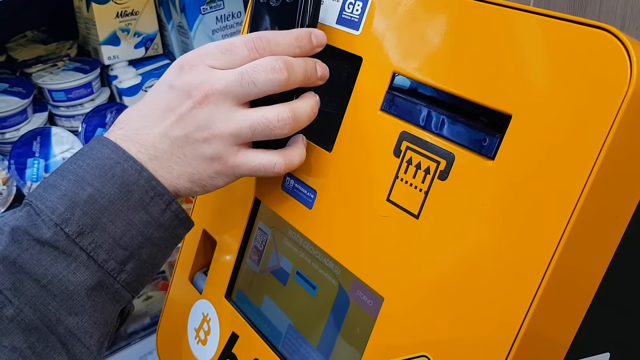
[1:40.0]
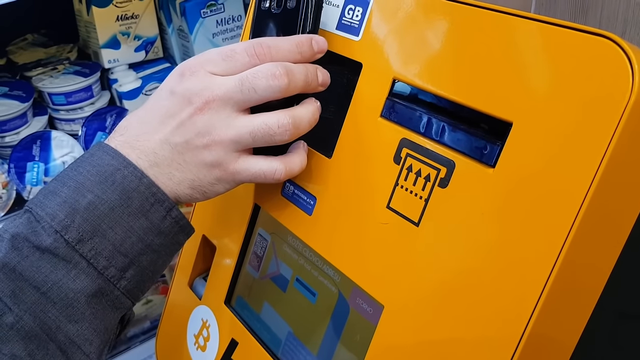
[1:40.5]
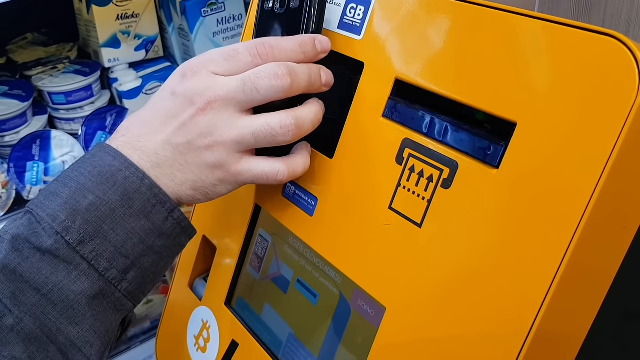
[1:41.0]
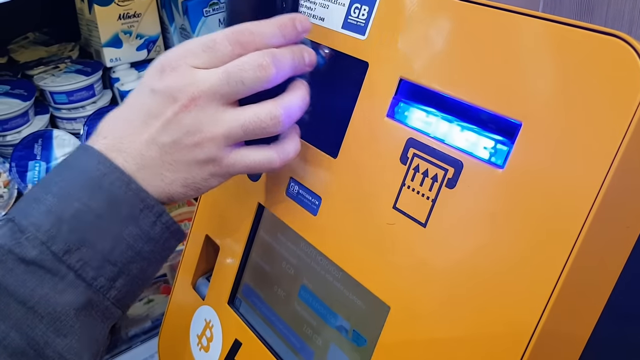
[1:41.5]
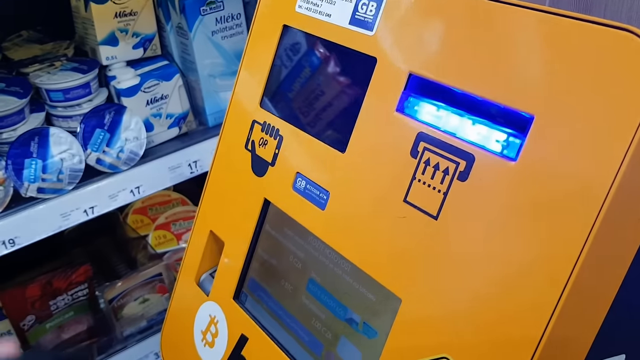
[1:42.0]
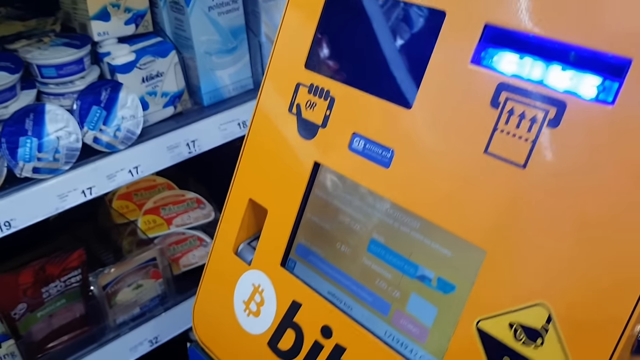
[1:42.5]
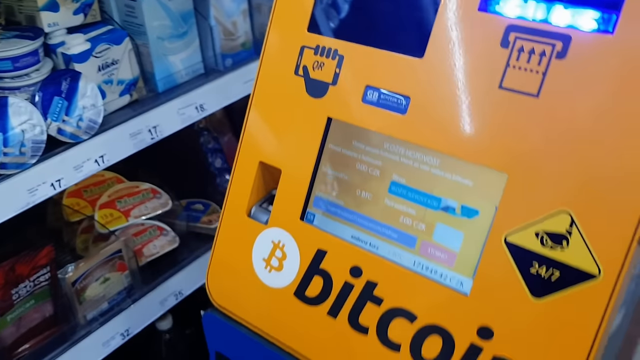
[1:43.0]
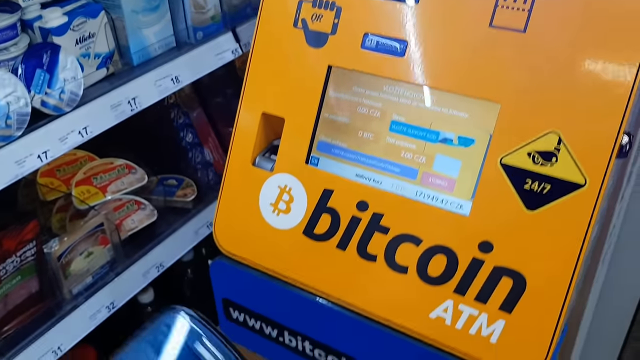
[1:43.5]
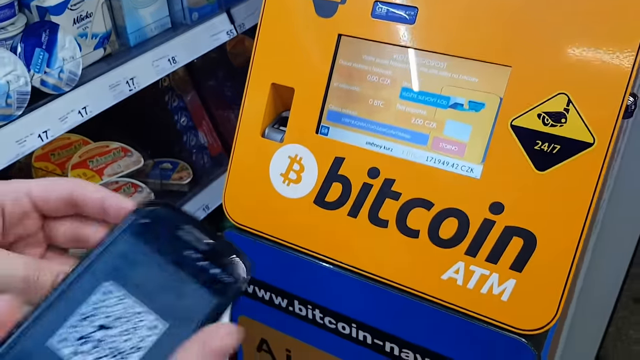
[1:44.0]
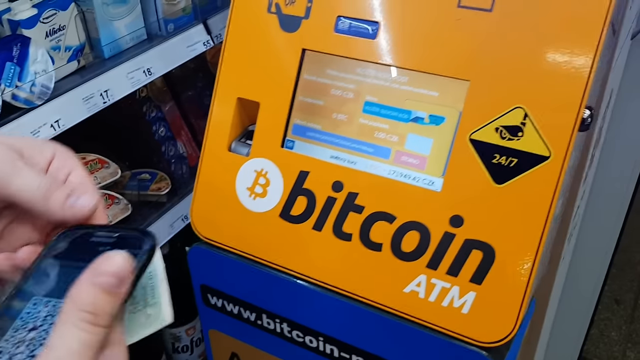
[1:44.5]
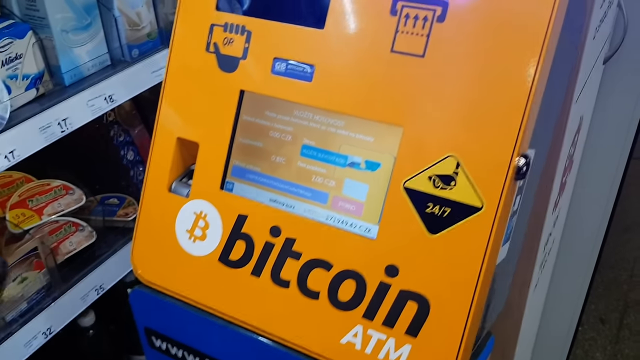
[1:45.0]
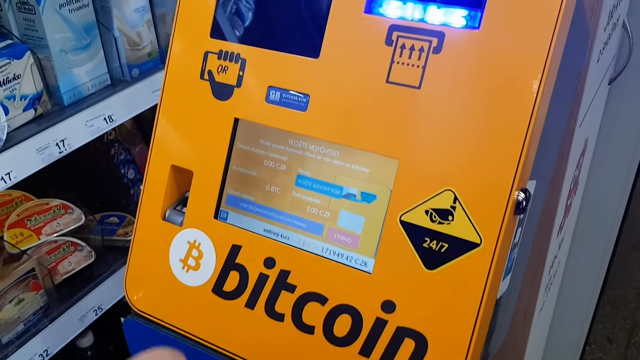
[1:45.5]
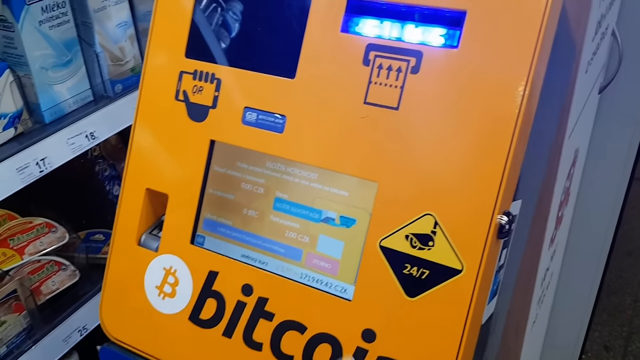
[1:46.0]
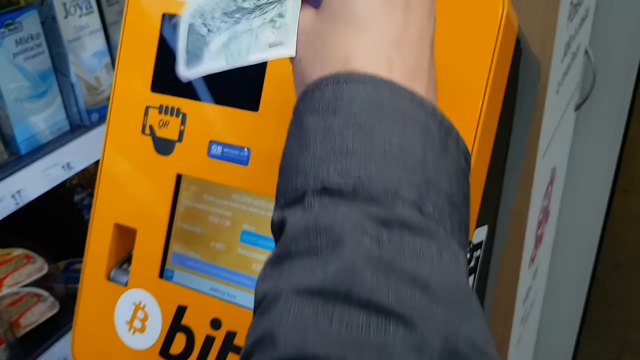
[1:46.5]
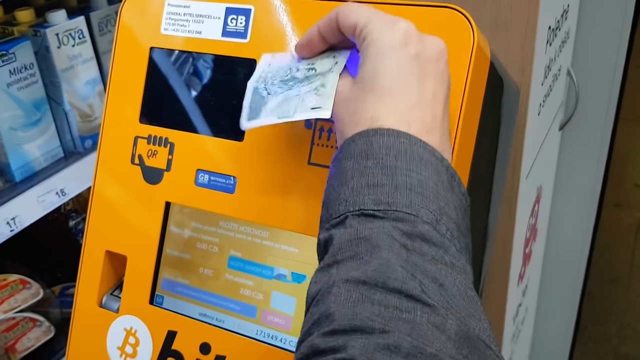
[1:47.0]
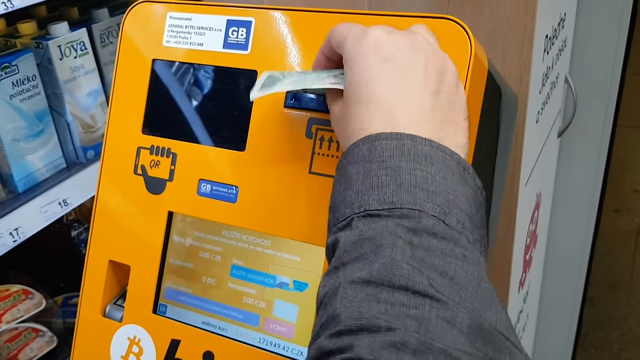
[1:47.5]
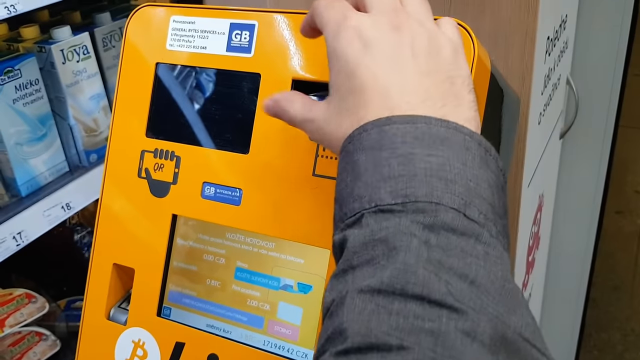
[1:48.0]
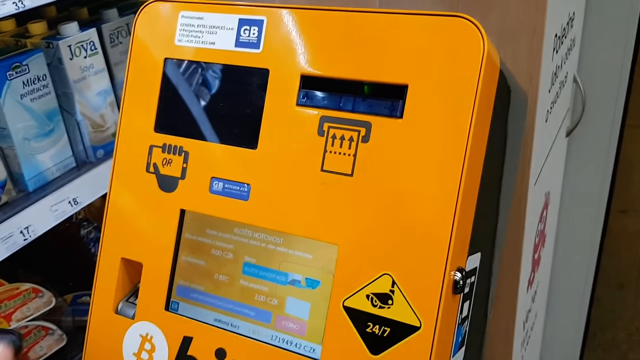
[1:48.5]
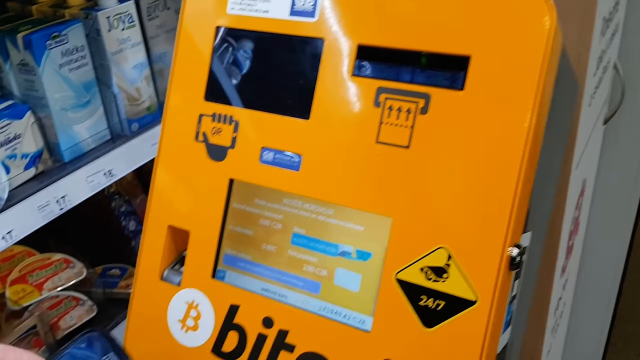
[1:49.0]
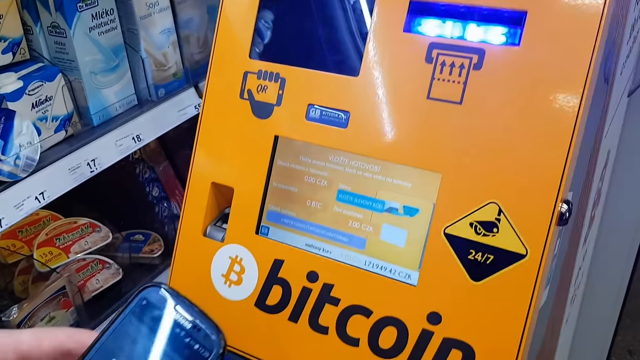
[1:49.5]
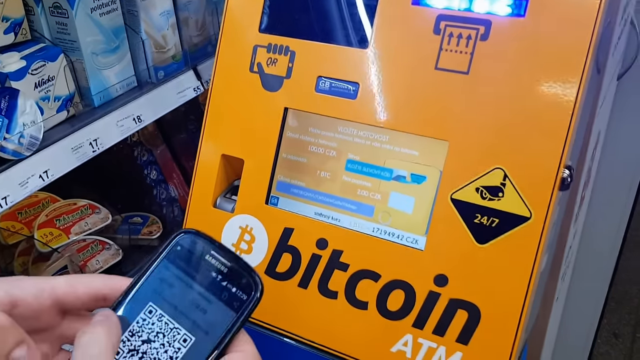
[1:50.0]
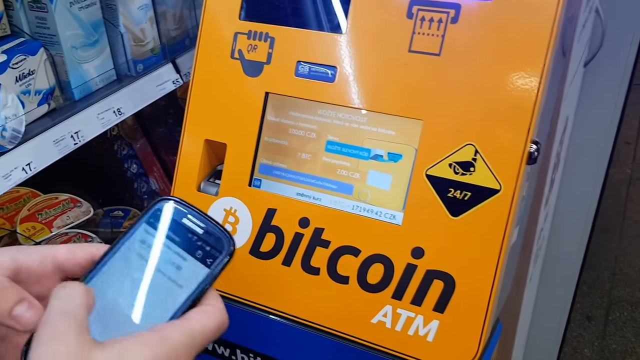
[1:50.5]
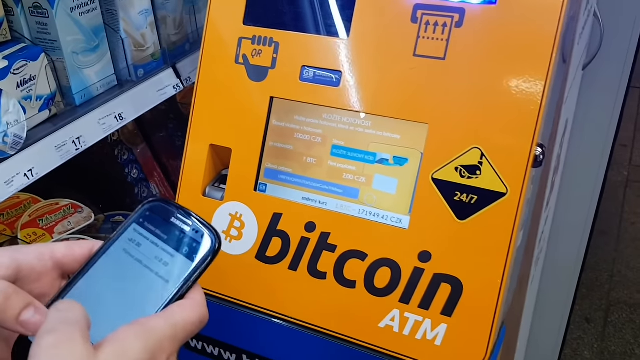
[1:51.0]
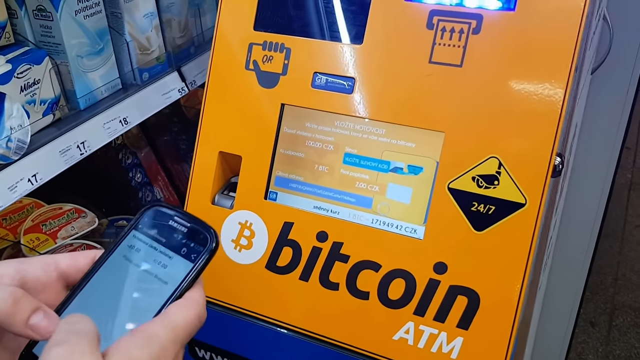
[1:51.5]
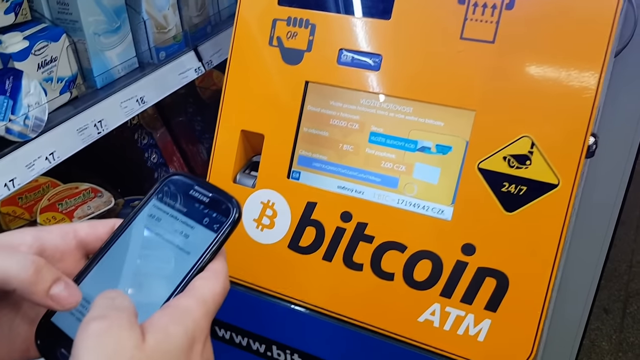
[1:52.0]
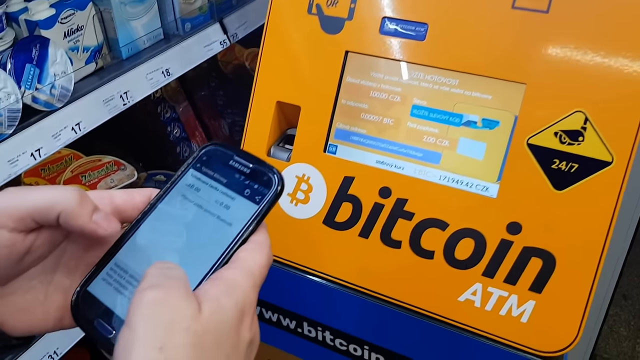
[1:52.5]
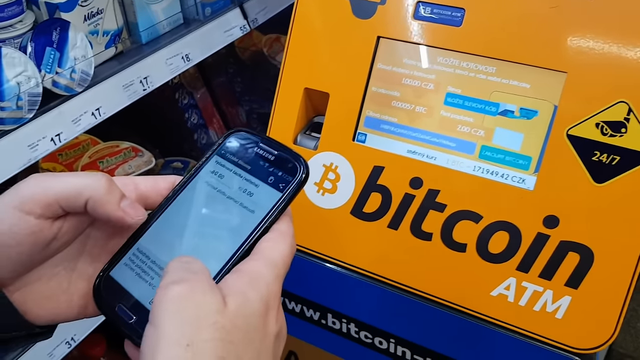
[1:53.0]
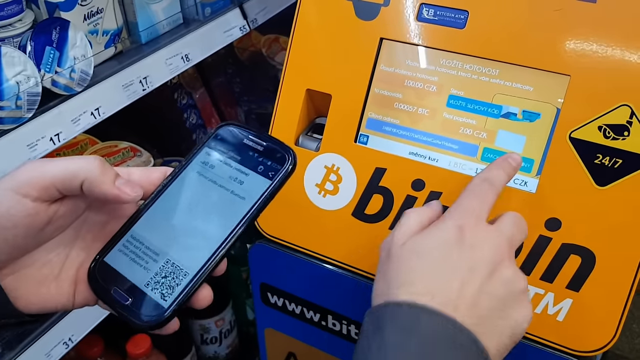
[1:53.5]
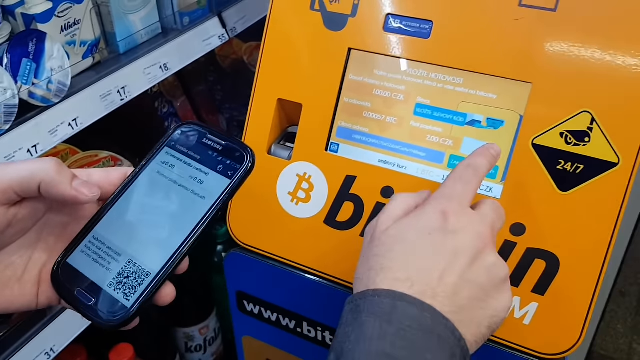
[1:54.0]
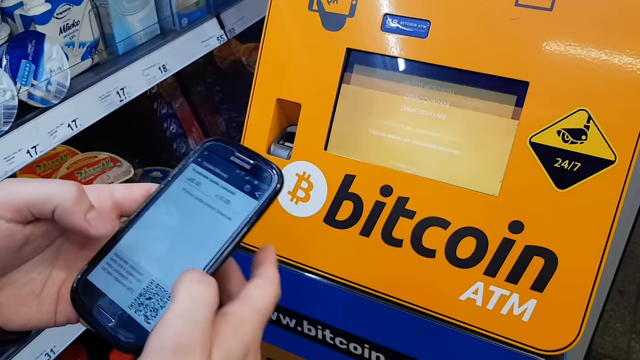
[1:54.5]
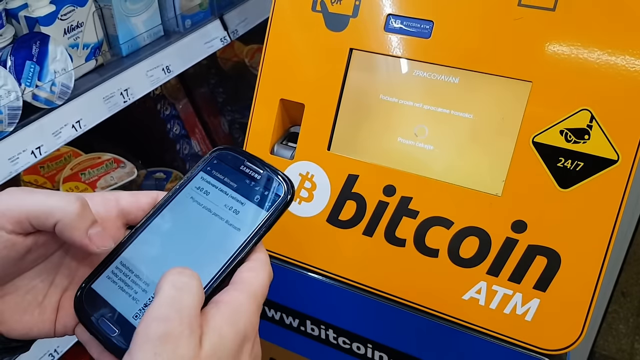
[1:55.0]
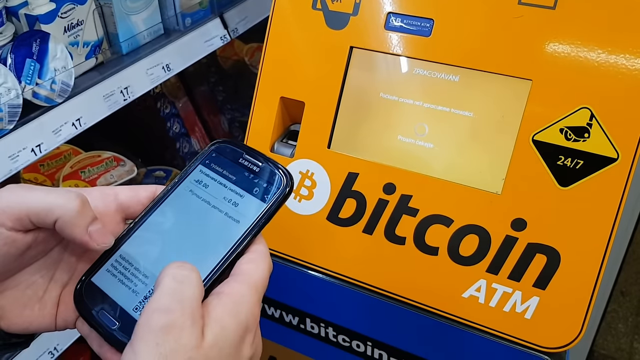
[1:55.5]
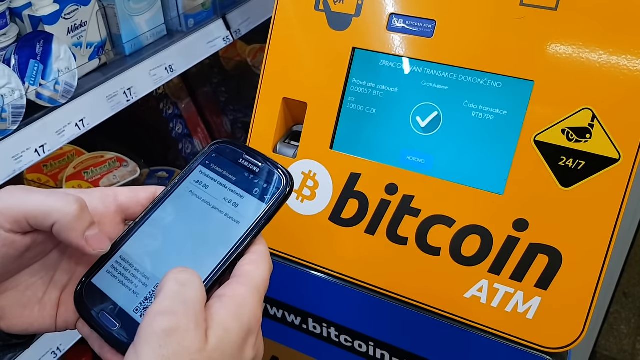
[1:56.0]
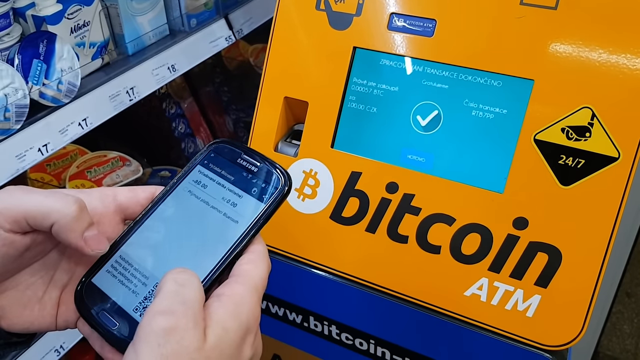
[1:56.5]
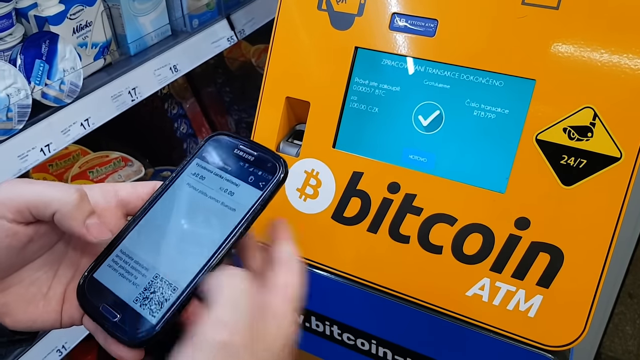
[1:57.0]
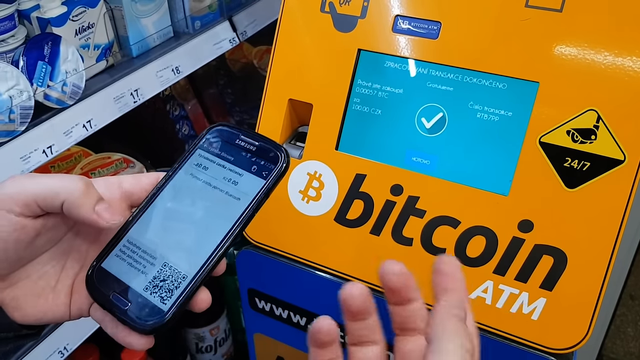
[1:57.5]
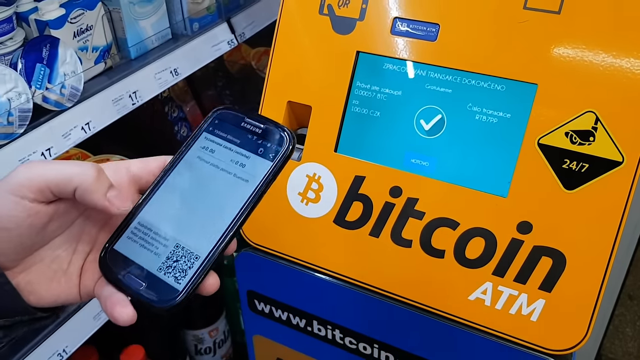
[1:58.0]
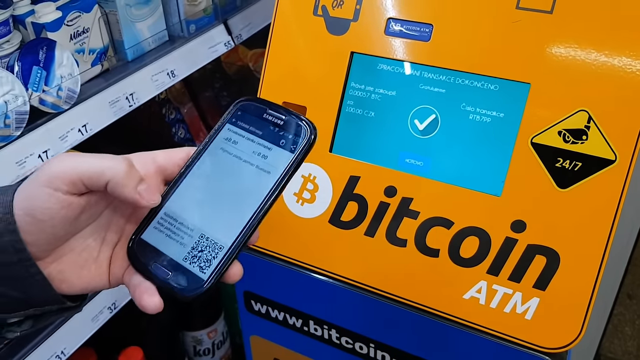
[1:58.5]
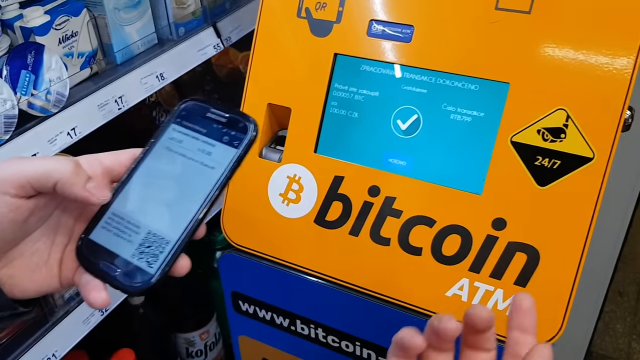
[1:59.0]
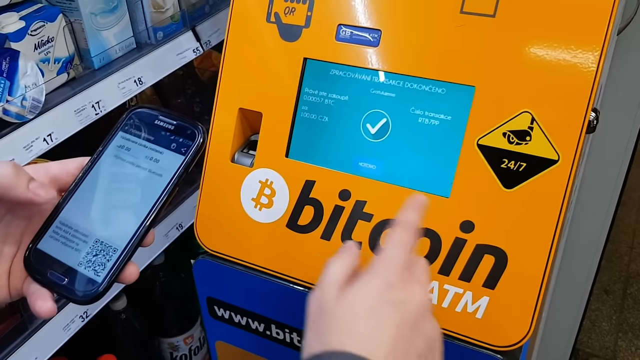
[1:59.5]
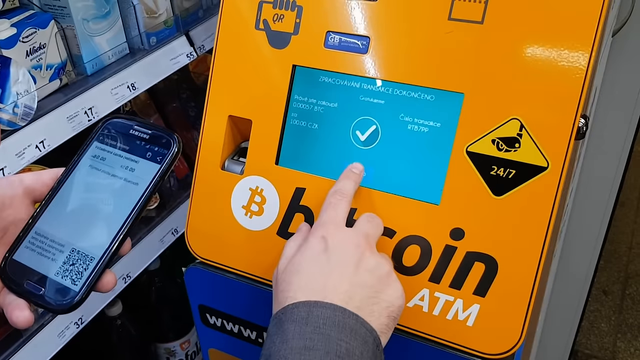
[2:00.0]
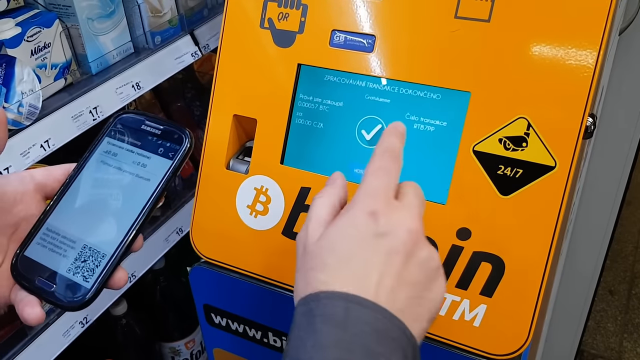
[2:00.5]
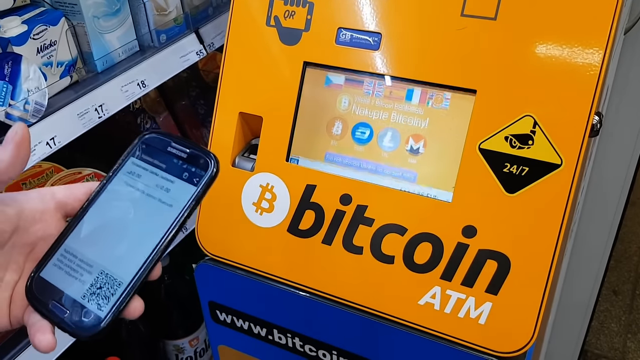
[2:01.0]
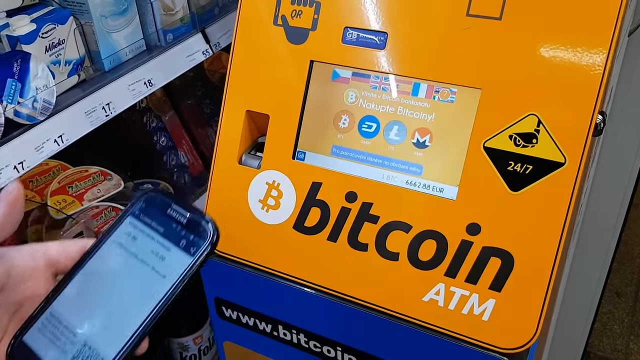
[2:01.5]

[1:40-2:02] Using their right hand, the user holds the phone screen up against a scanner on the Bitcoin ATM to scan the QR code brought up by the downloaded app. They hold it there until a light indicates the QR code has been accepted or read, which brings up a new window on the ATM's touchscreen. The user brings the phone back toward them and turns off its screen. With their right hand, the user begins placing some sort of currency into the slot of the ATM, seemingly making a deposit or purchasing Bitcoin. They press some buttons on the phone again, then return to the touchscreen and select a button that changes the screen once more. A loading indicator appears and disappears, followed by a green screen with a circle and a check mark in the middle, which seems to indicate that the transaction is complete and successful. Holding the phone in their left hand, the user looks at the app once more while gesturing to the machine with their right hand and pressing a button to end the transaction.